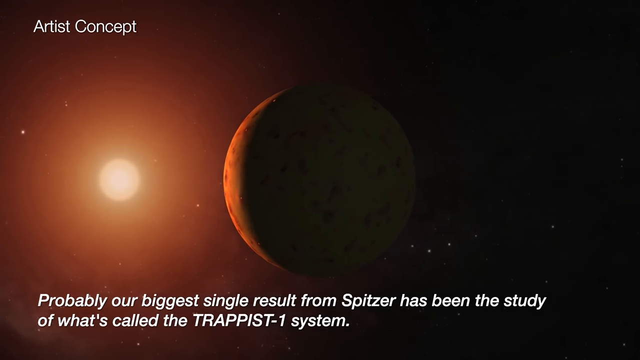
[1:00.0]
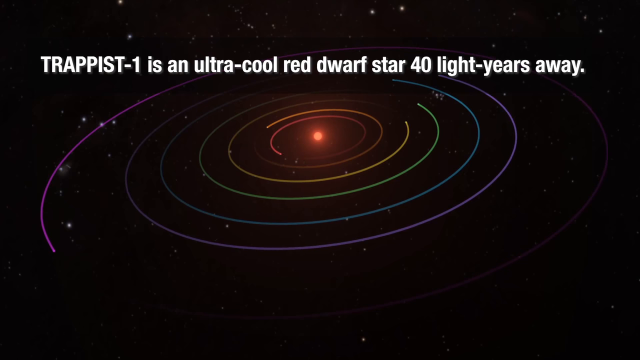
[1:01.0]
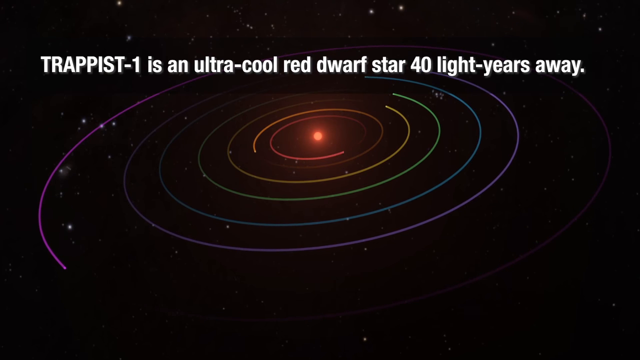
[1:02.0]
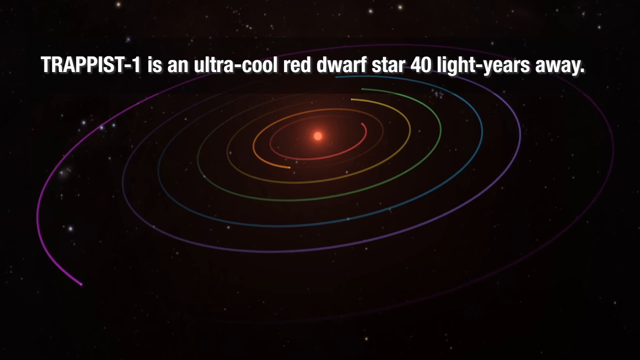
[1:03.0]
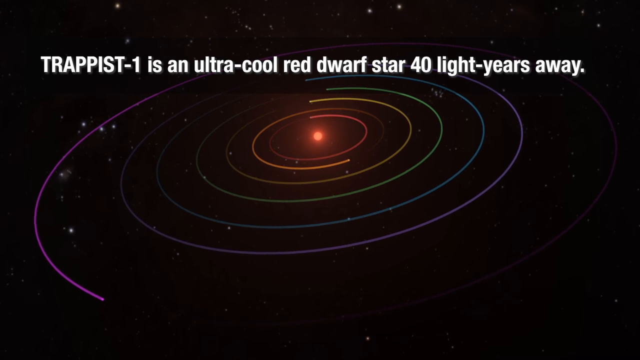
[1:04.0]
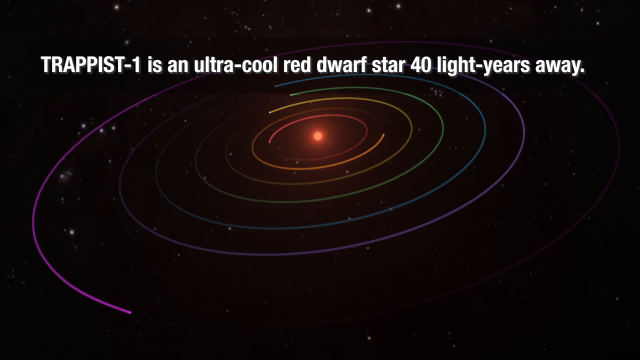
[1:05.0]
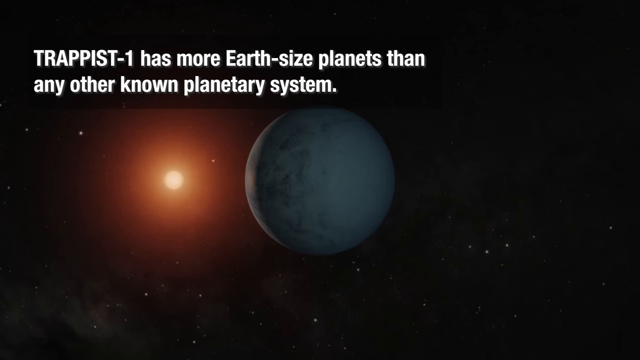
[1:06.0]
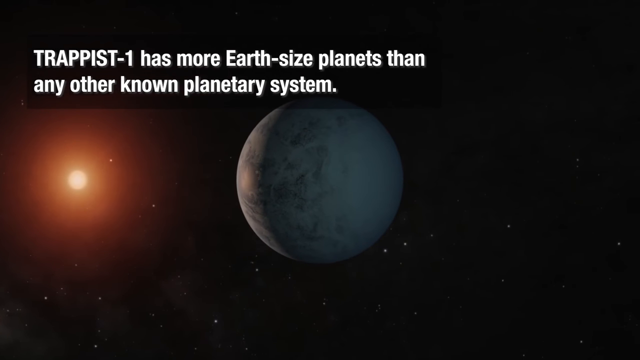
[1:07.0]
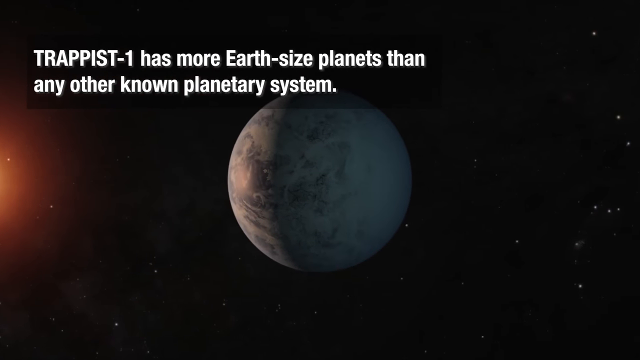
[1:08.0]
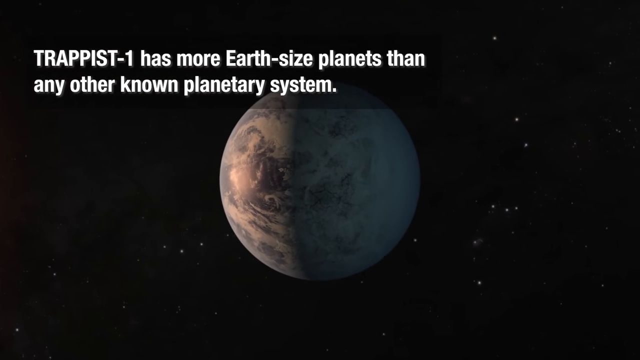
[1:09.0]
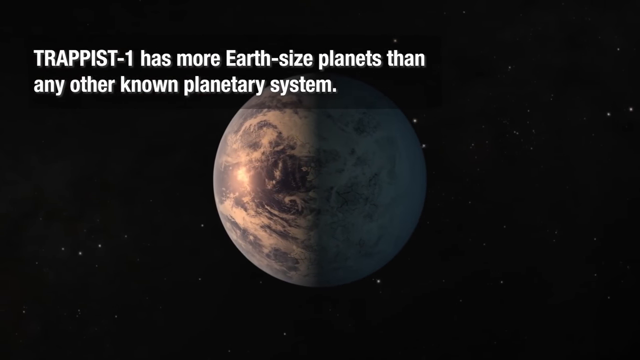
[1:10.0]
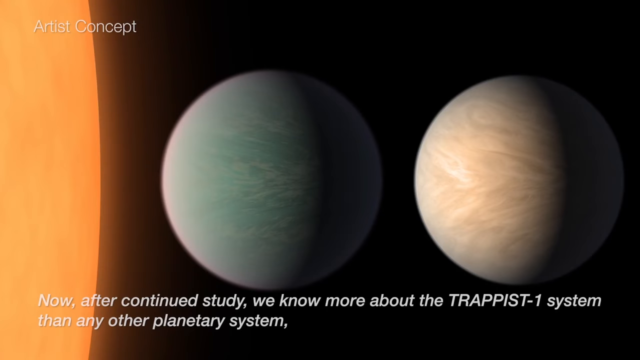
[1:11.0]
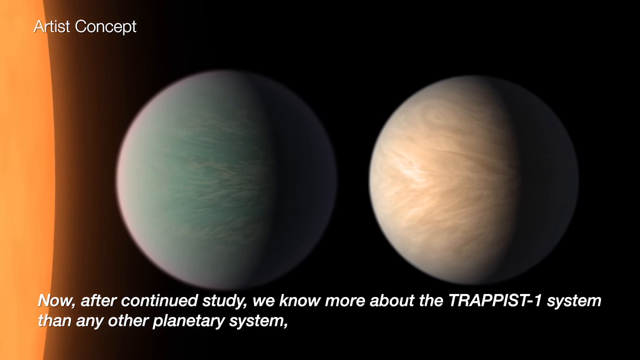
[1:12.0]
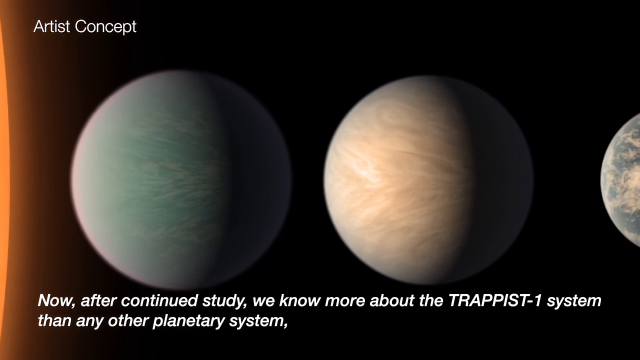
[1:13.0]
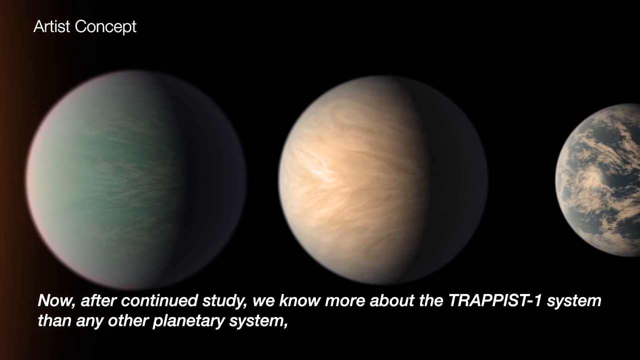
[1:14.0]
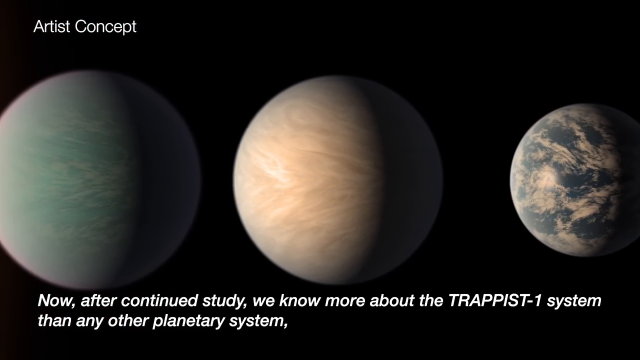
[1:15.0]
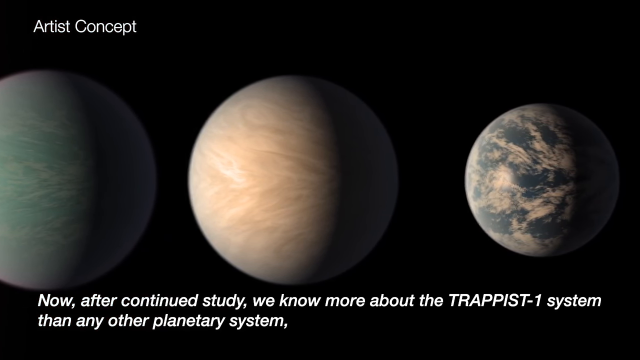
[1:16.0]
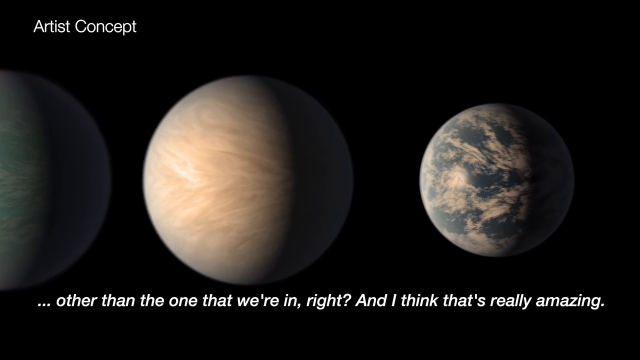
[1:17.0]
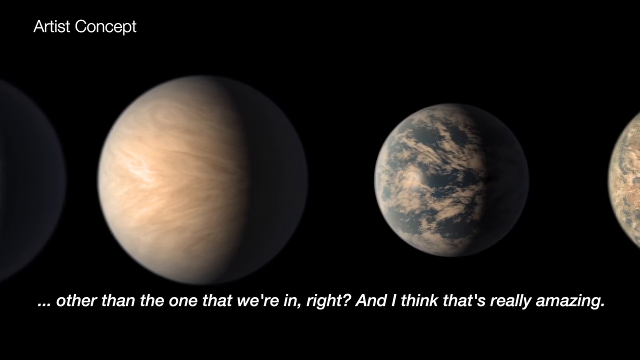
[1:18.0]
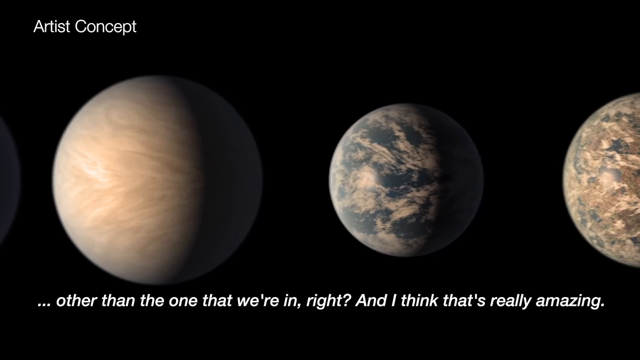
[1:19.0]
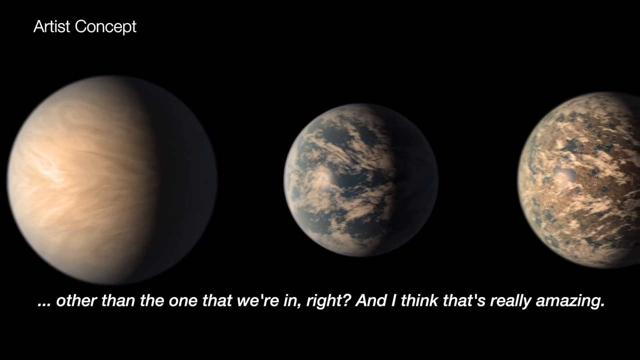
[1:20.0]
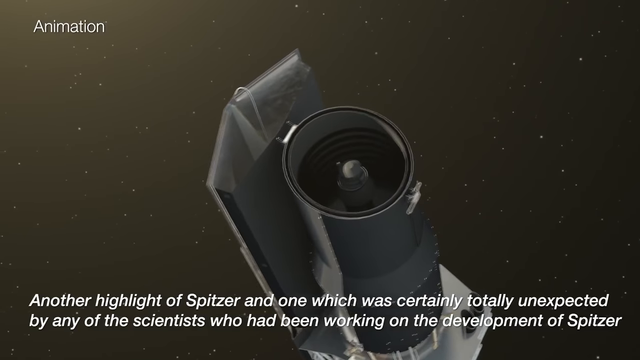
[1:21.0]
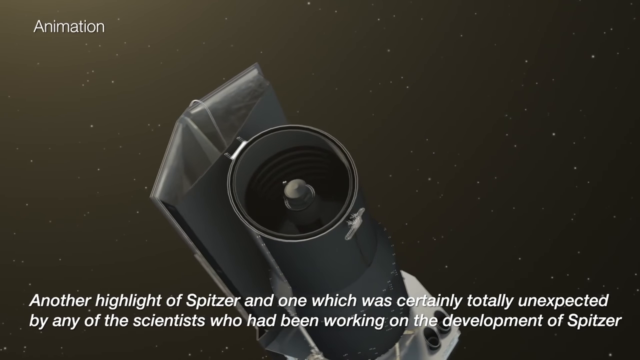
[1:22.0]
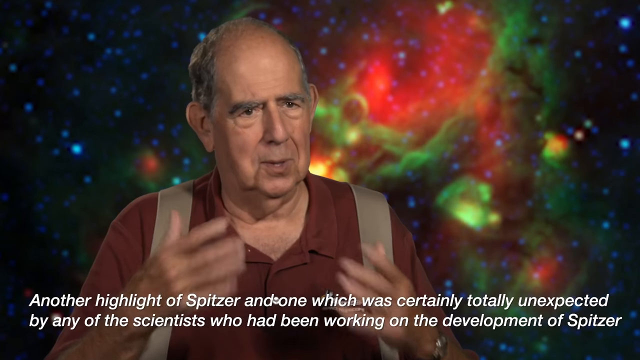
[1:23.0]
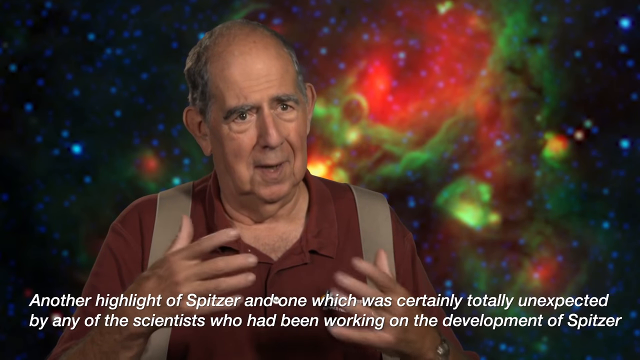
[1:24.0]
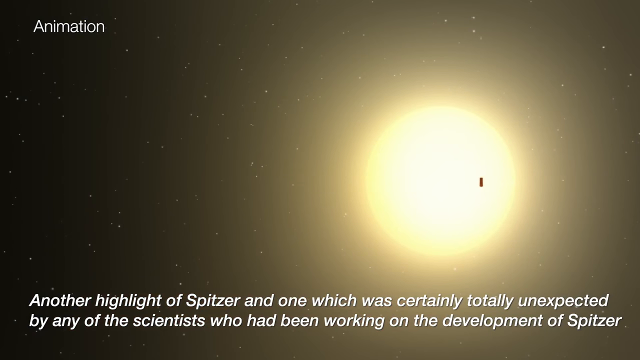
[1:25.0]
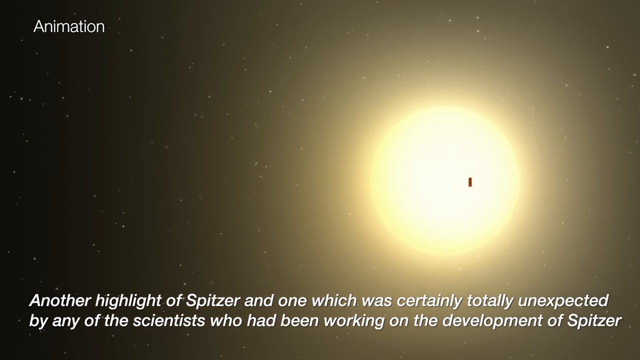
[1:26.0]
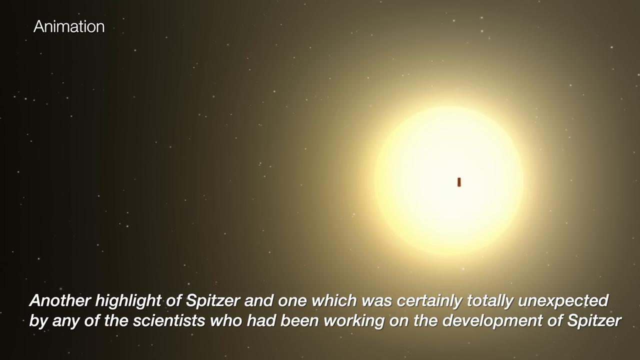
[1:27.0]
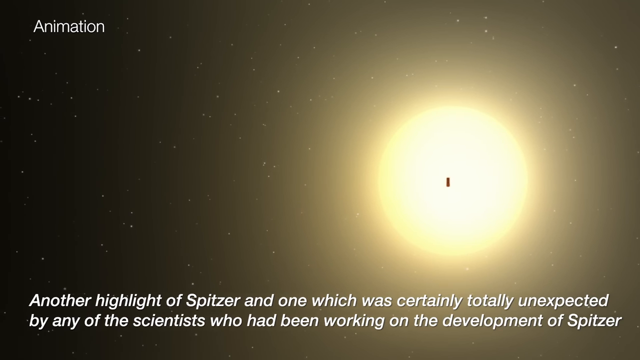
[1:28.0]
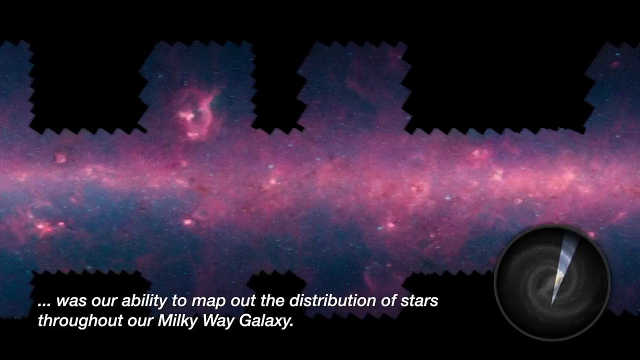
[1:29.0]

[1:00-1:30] In a computer-generated scene of outer space, white text in the upper left reads "artist concept". In the distance is what looks like a sun or another type of star, a yellow glowing orb, and to the right of it is the reflection of a planet. The view kind of turns and fades into a different computer-generated image: purple, green and yellow swirls making sweeping, arching motions around a red-orange dot at the center, which looks like some kind of sun at the center of some kind of galaxy. The colorful swirls move in a counterclockwise direction. Then a different outer space scene shows a sun shining on a blue-looking planet, similar to Earth though not Earth. The camera turns around, showing the sun shining on the object.